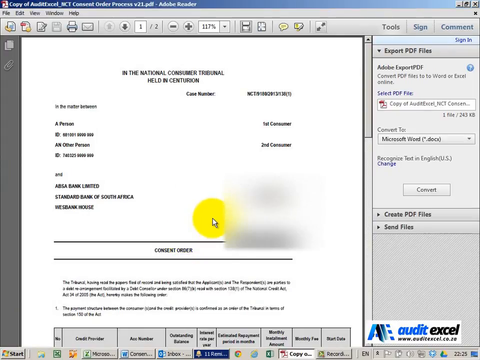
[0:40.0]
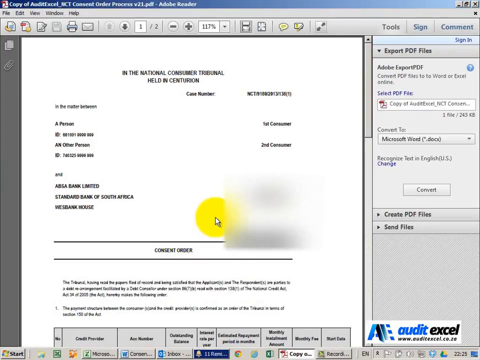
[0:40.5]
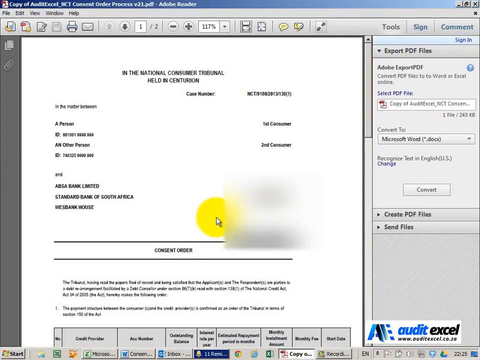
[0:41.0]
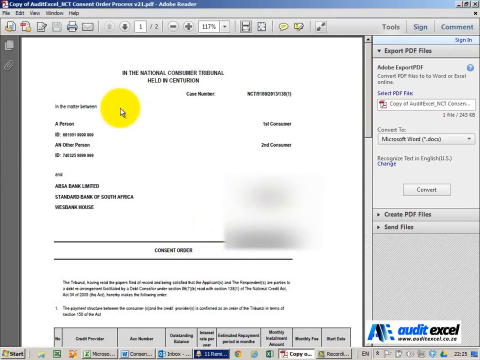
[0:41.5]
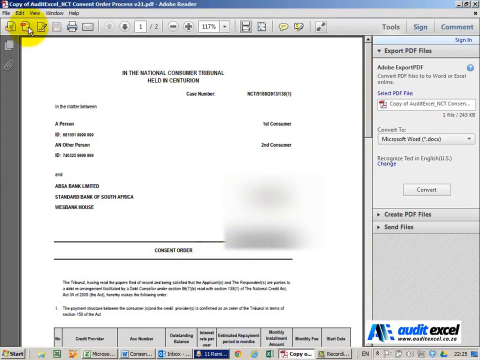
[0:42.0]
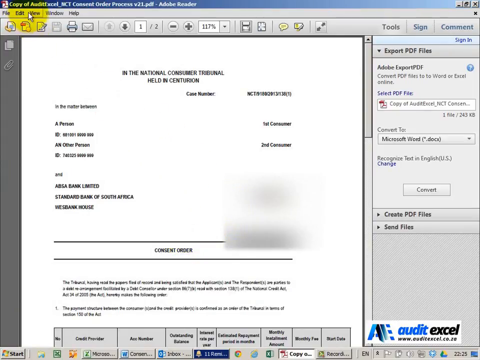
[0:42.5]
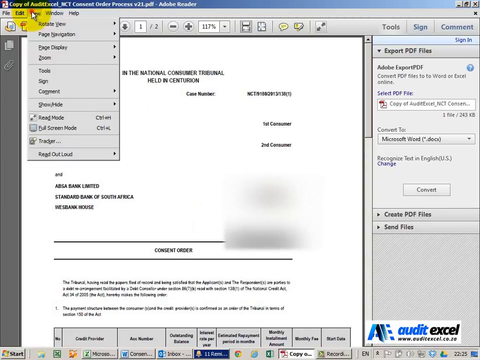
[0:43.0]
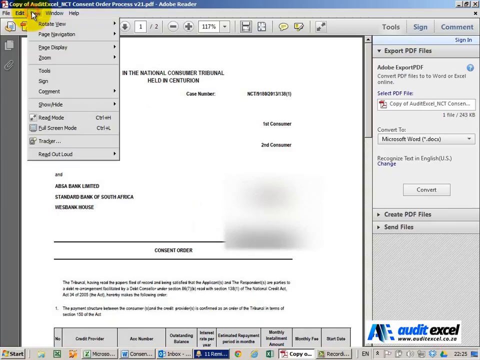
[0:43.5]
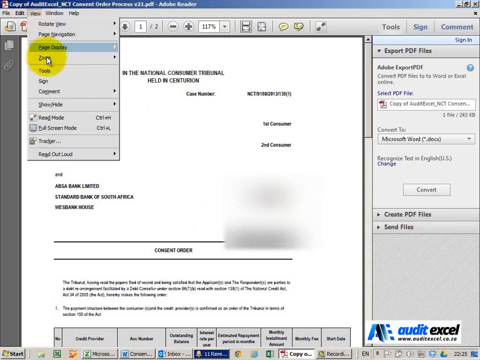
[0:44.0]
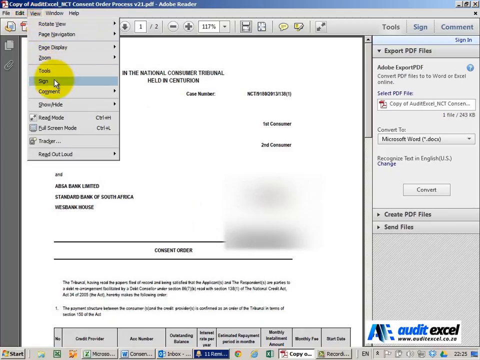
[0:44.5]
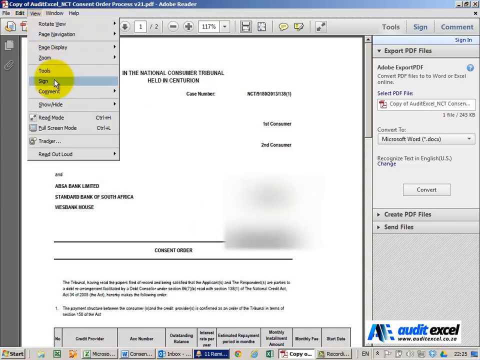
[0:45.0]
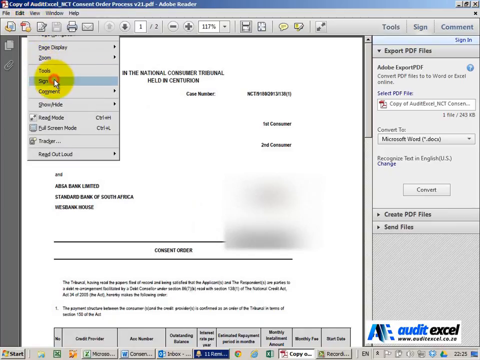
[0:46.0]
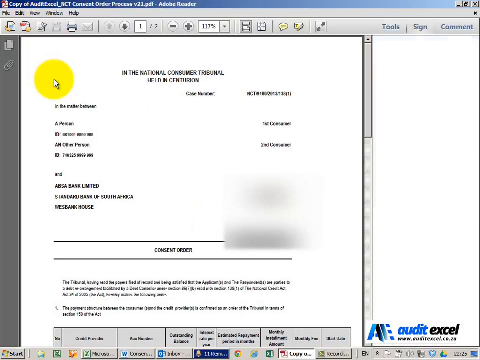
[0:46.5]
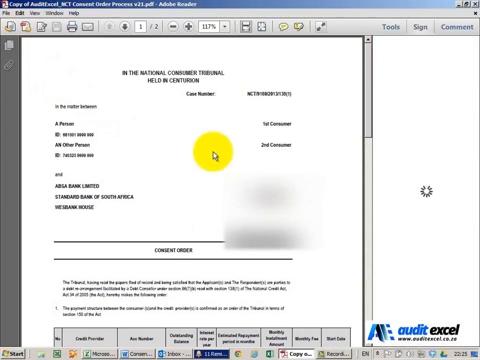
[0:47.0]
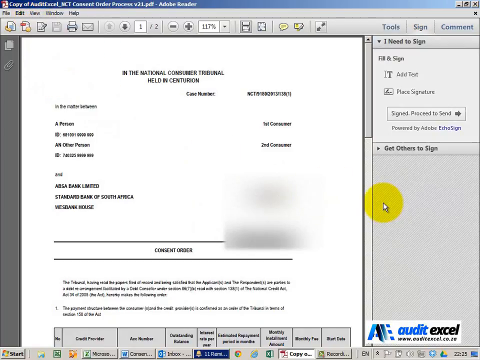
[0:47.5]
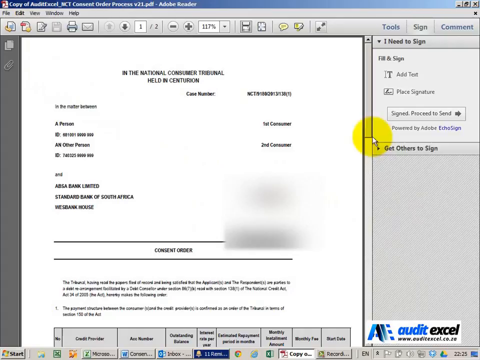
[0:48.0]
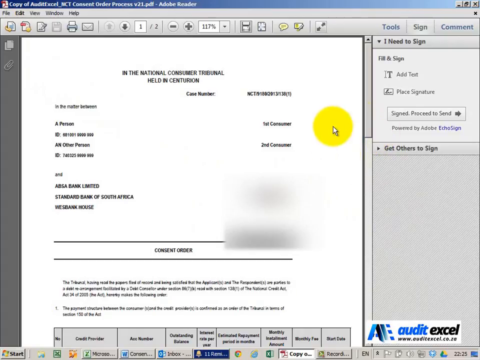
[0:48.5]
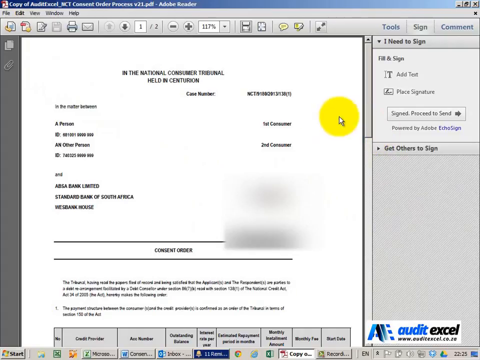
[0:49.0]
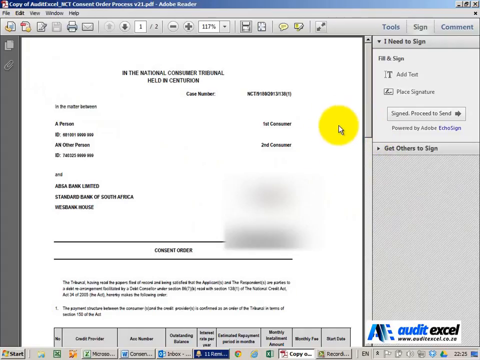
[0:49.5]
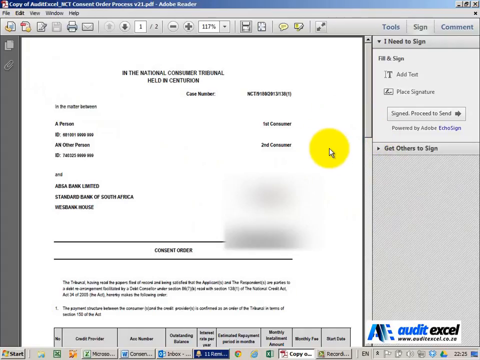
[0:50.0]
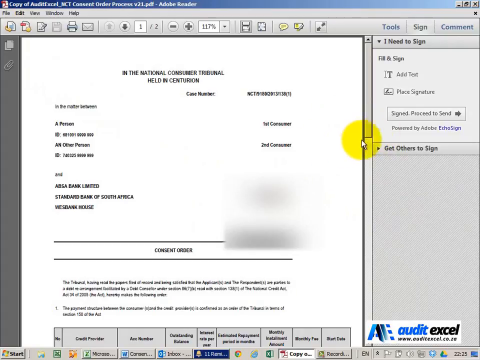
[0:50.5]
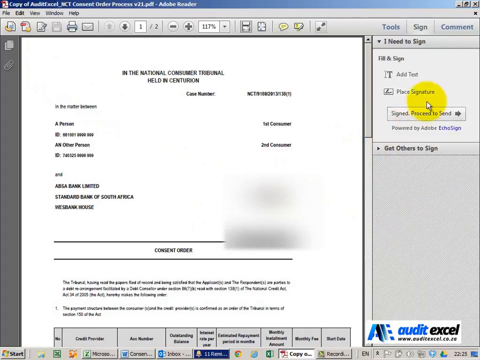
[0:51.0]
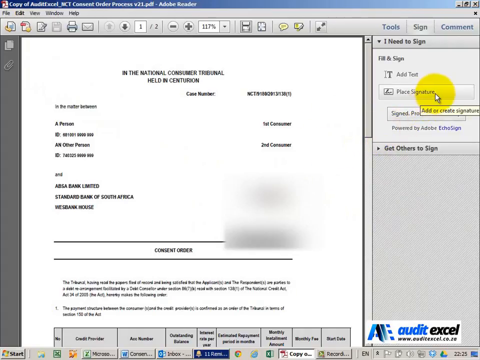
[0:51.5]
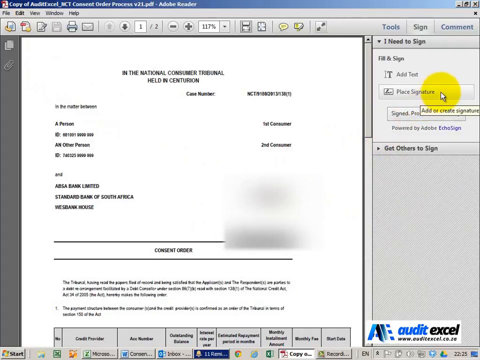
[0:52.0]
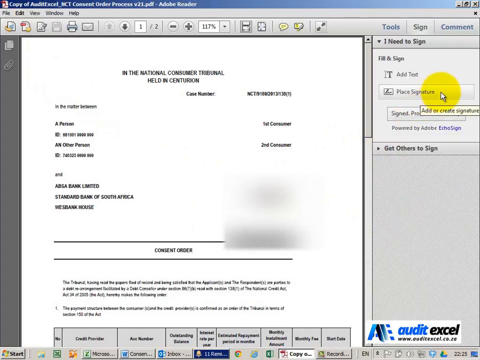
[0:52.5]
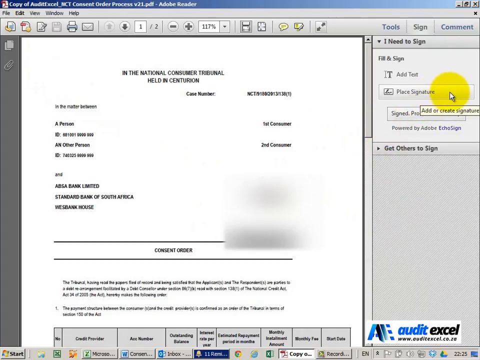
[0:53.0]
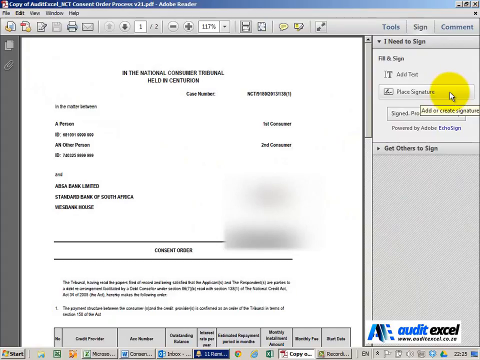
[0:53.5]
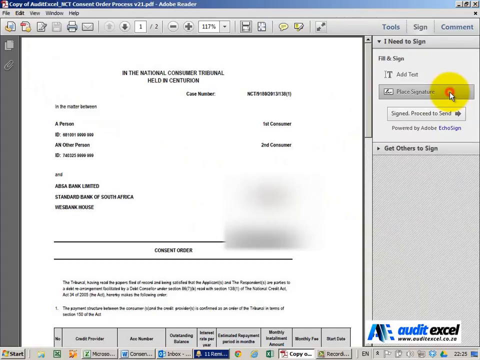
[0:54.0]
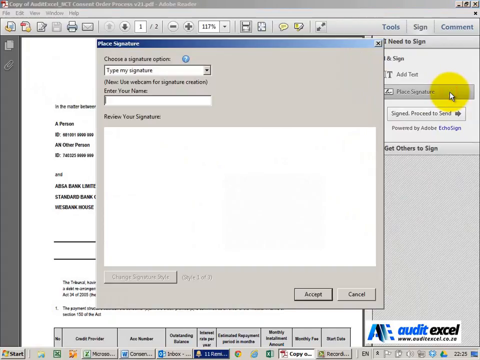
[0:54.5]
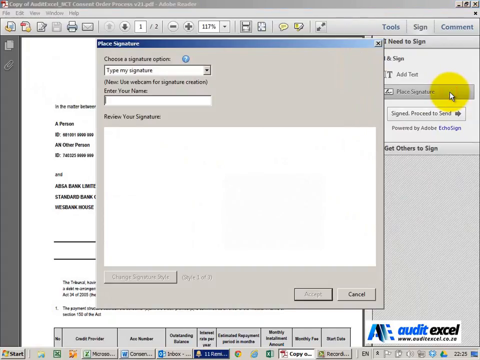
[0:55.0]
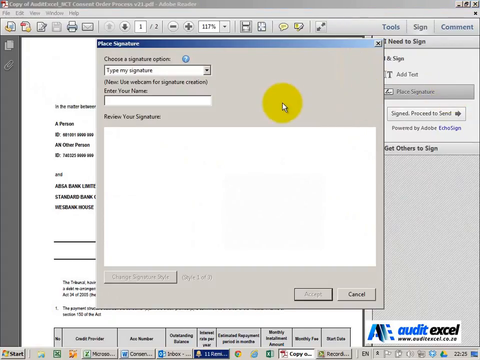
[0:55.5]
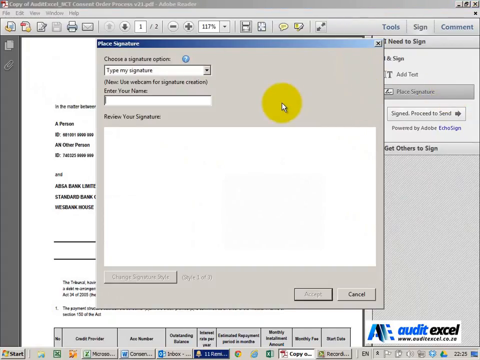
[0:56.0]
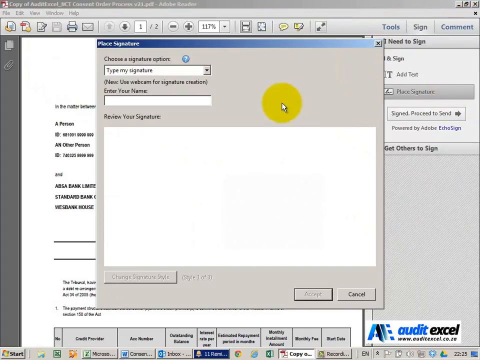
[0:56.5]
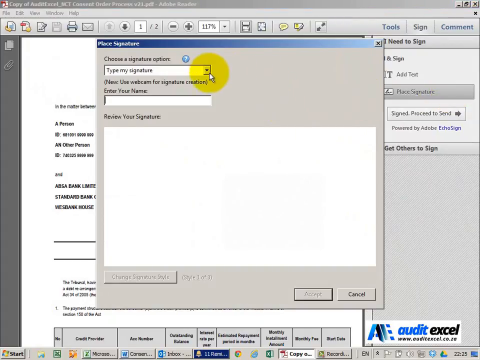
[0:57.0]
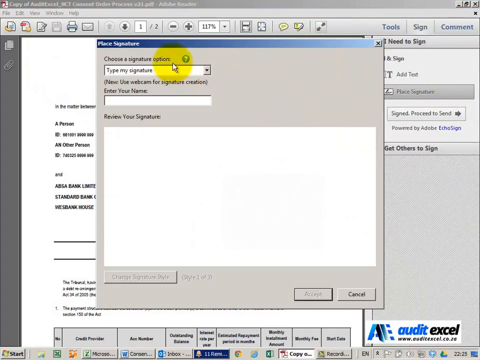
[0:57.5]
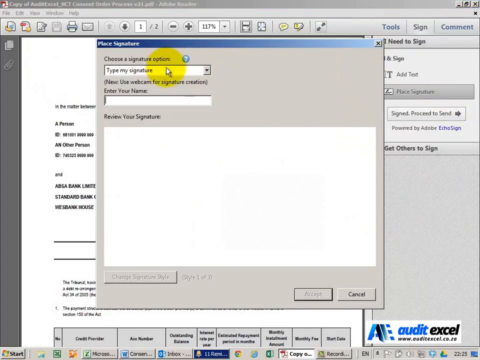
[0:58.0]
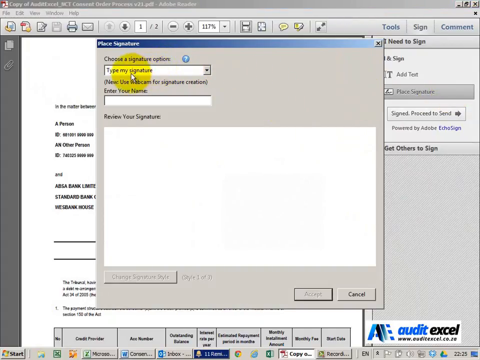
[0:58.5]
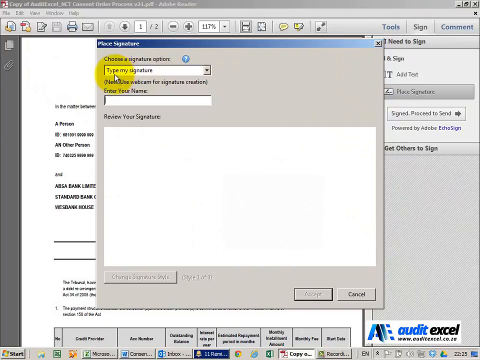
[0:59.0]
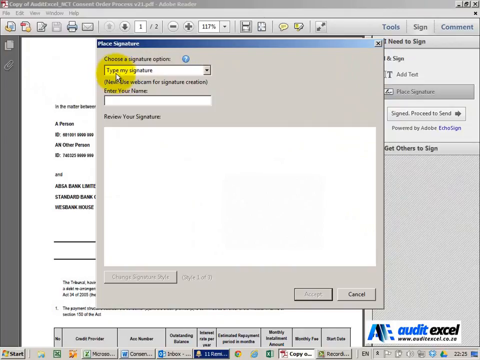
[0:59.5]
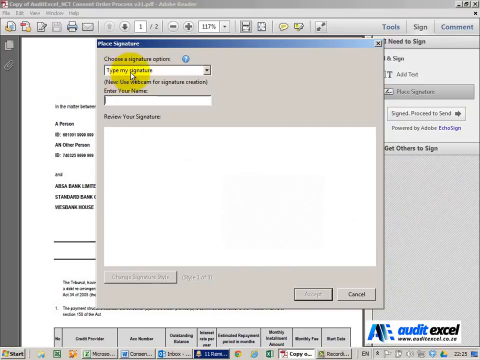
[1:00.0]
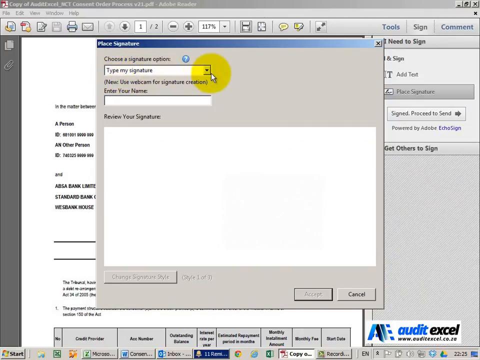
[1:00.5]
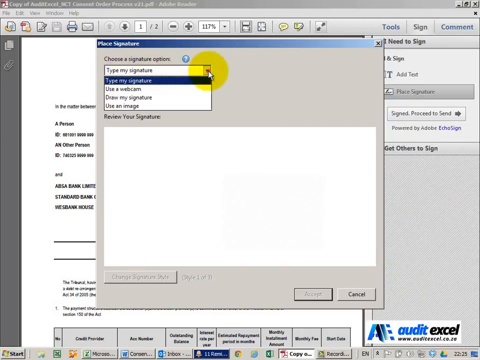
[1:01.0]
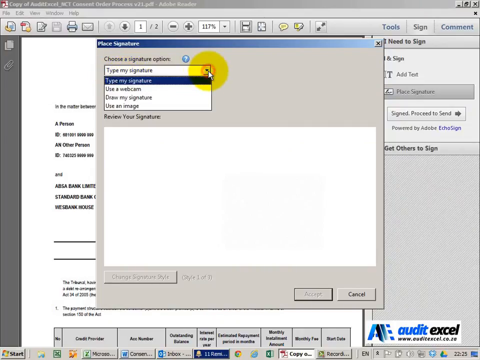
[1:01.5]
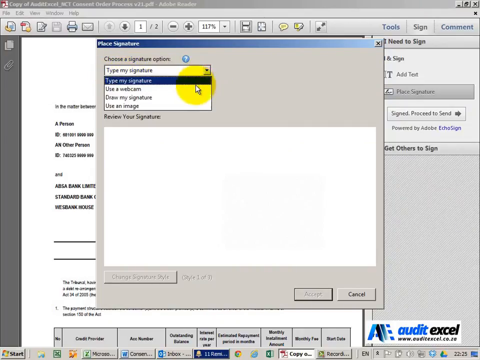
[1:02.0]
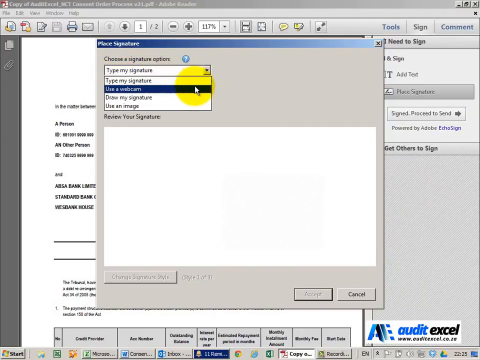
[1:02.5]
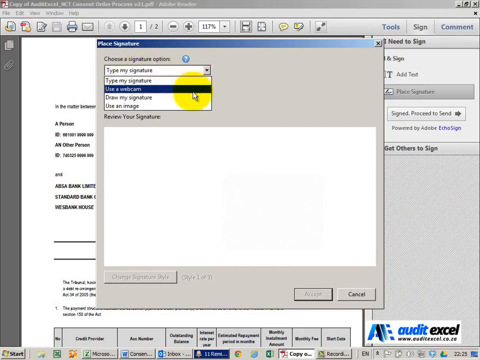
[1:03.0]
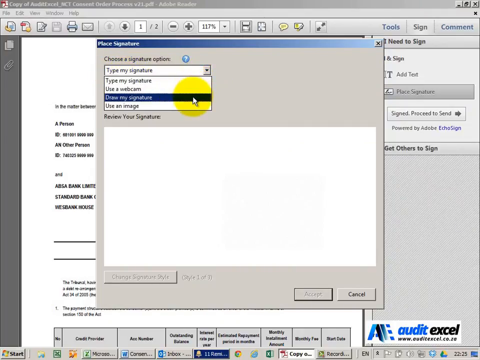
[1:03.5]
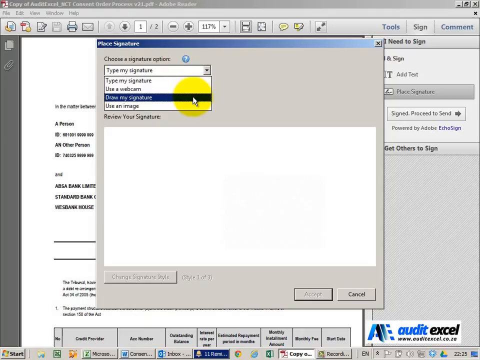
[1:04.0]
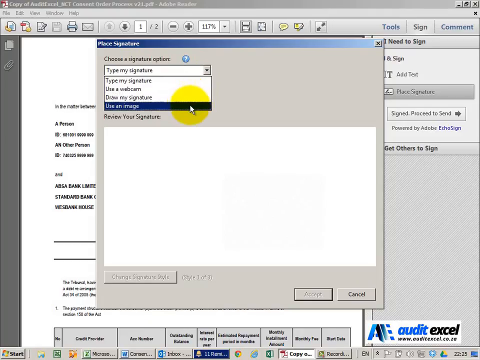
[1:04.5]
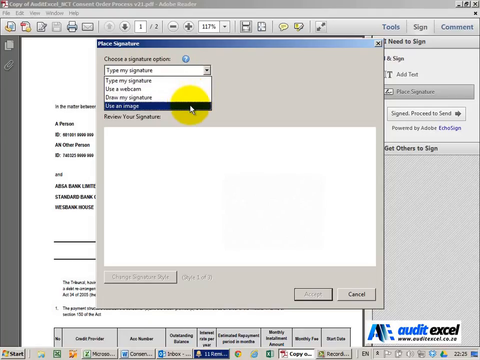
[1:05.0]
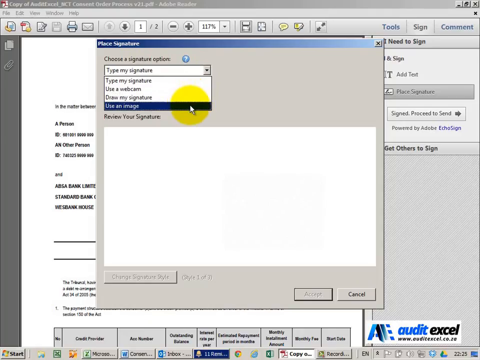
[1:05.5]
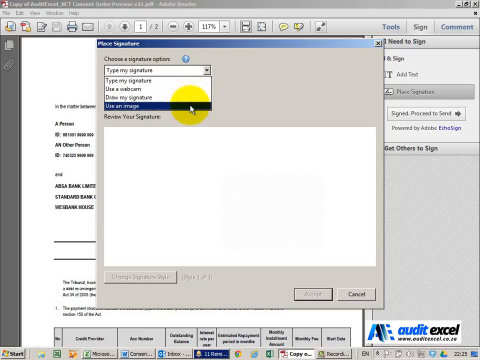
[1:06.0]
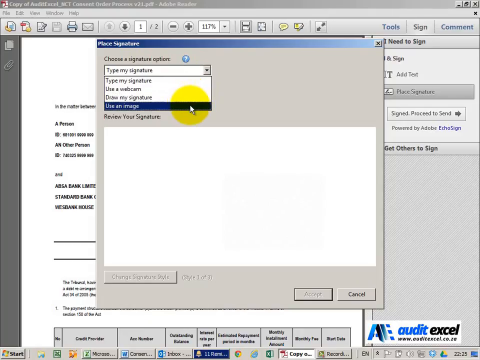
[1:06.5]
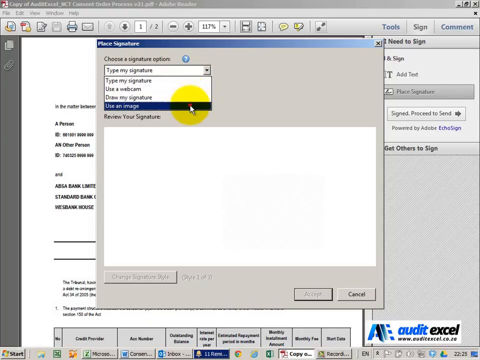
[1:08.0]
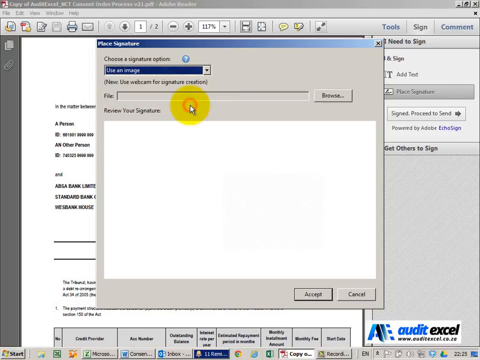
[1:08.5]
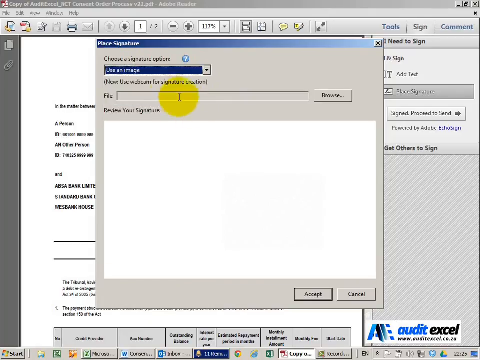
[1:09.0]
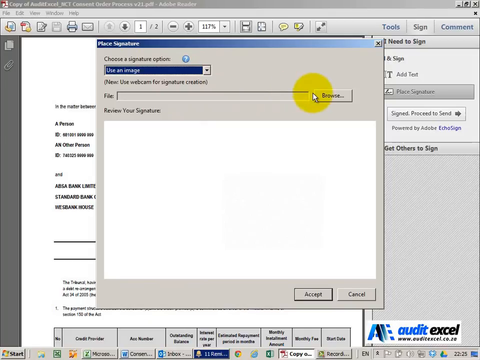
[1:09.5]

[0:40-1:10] The yellow-highlighted mouse pointer moves up to what are apparently the edit or file tabs. The user seems to be trying to add a signature to the file, but everything is grayed out, and they move away from it. Some information is blurred, apparently private. The words are too small to read. The document looks like an Adobe Acrobat PDF file, and the user apparently tries to save the file after making changes.